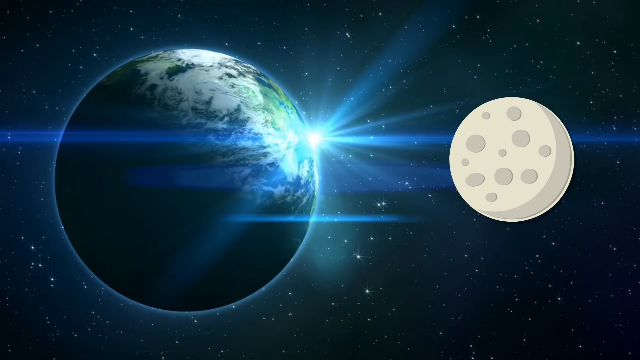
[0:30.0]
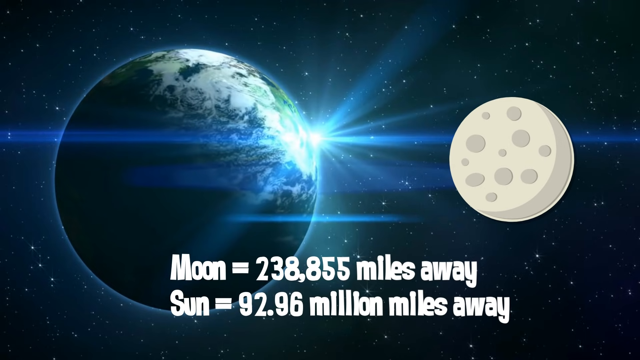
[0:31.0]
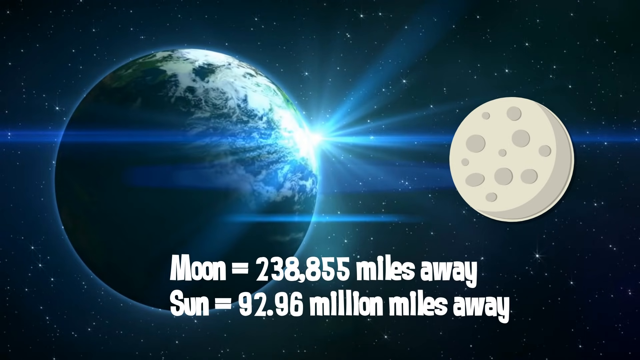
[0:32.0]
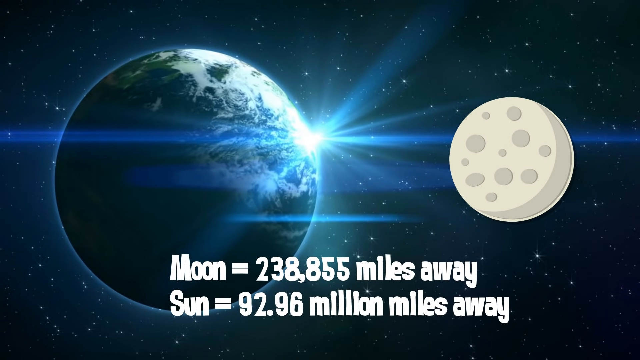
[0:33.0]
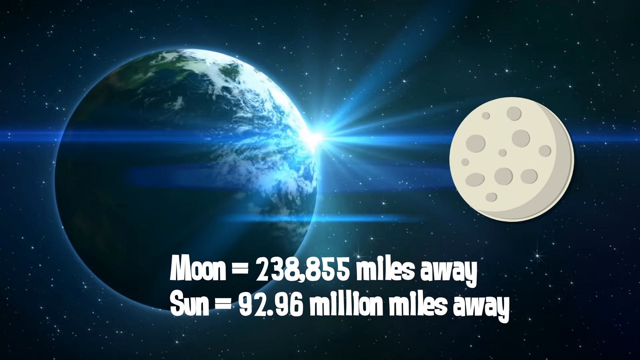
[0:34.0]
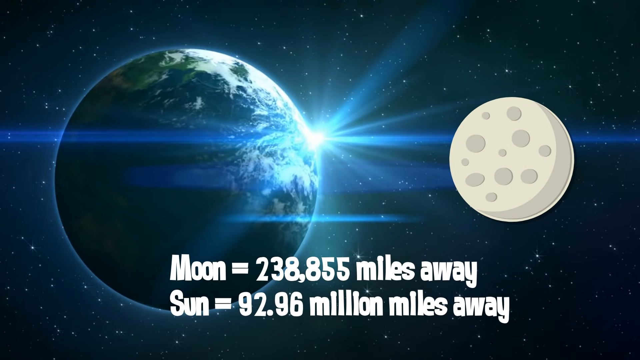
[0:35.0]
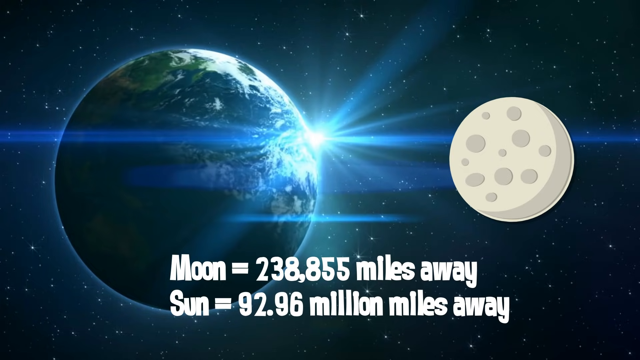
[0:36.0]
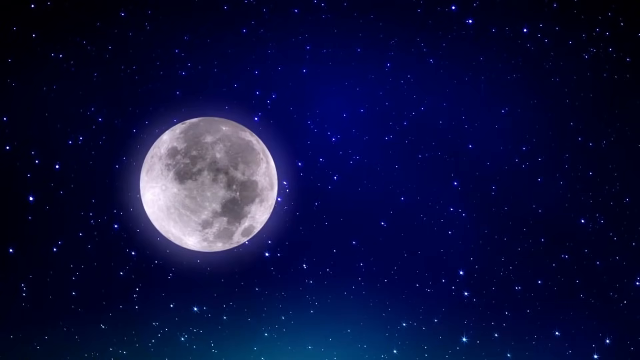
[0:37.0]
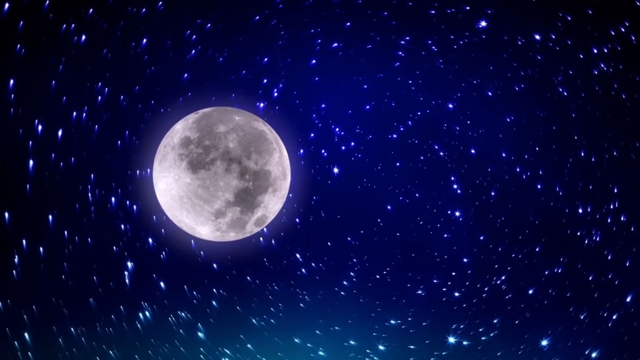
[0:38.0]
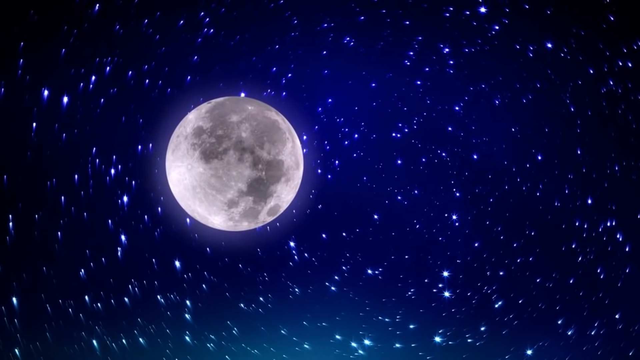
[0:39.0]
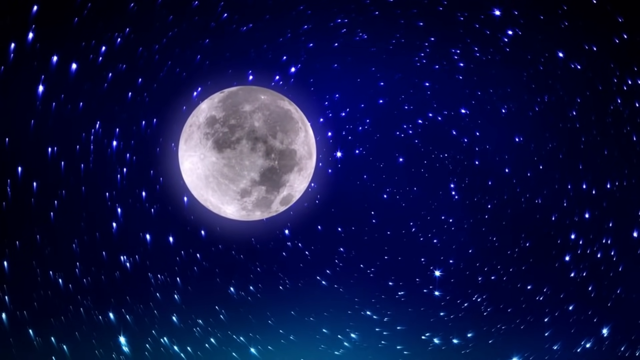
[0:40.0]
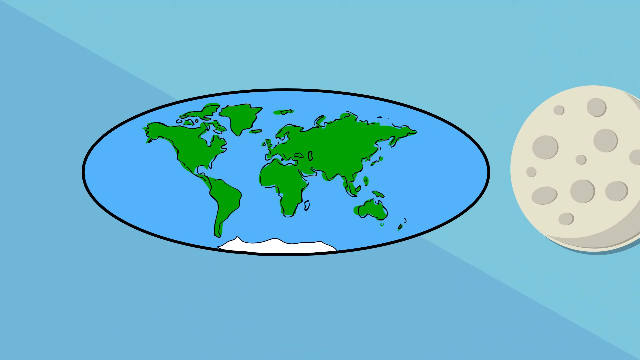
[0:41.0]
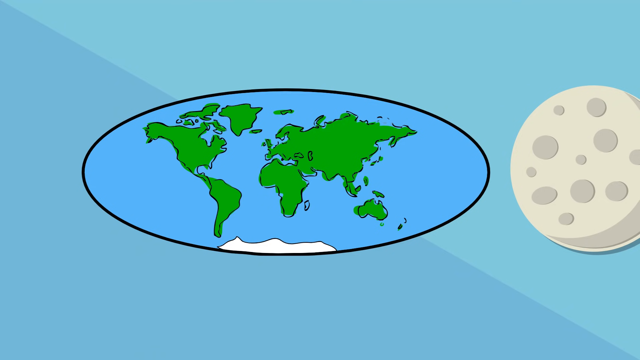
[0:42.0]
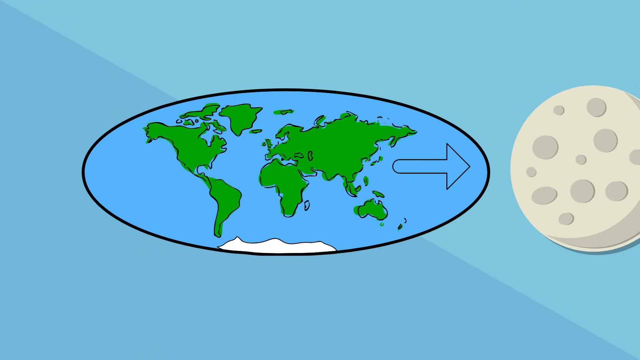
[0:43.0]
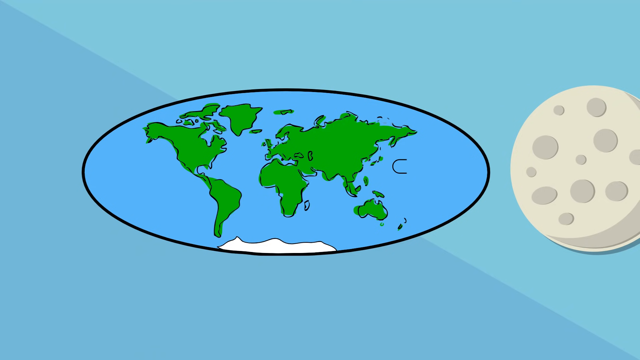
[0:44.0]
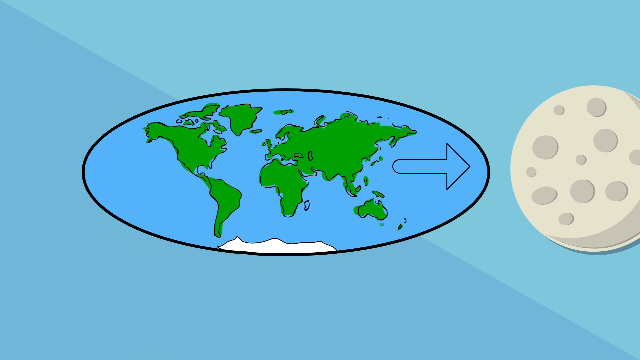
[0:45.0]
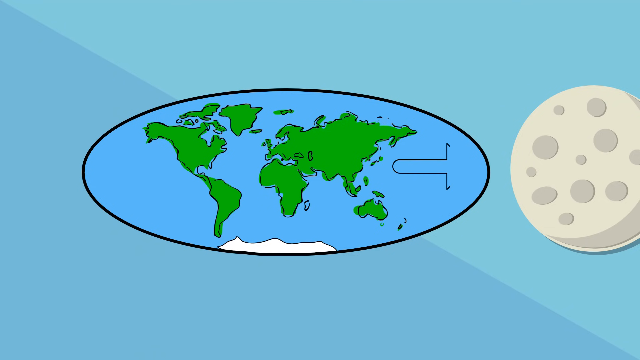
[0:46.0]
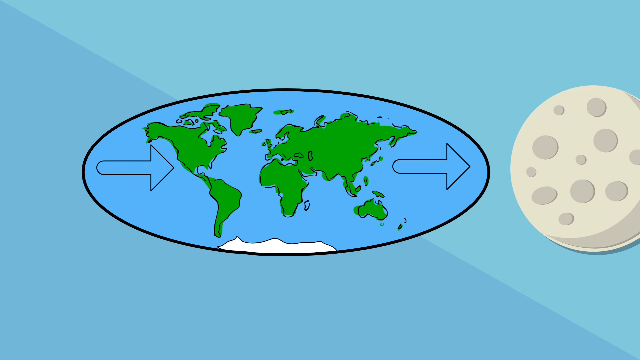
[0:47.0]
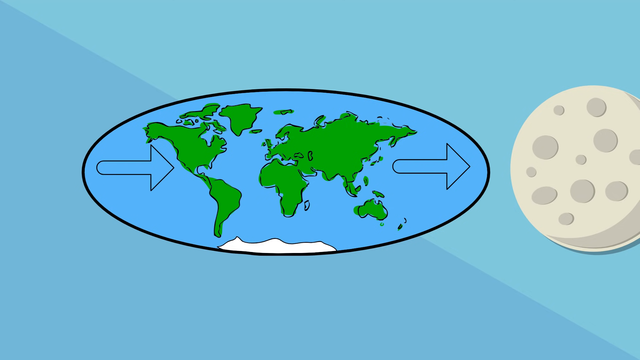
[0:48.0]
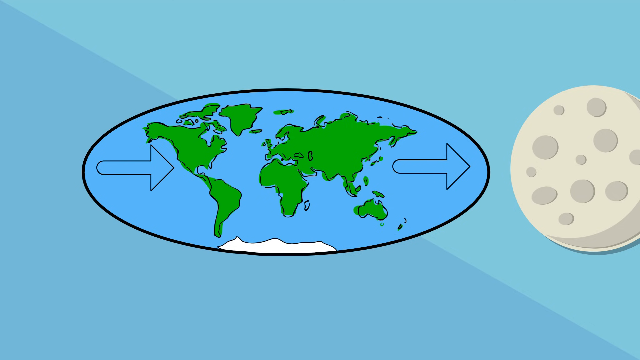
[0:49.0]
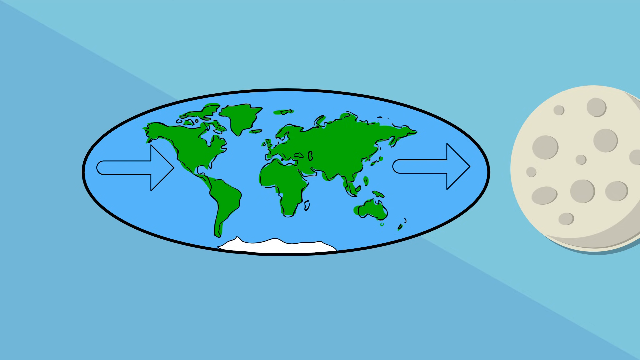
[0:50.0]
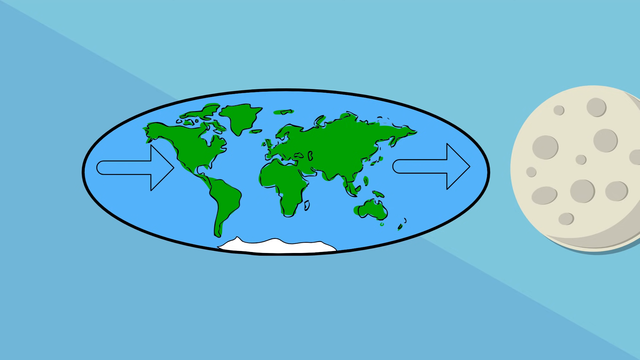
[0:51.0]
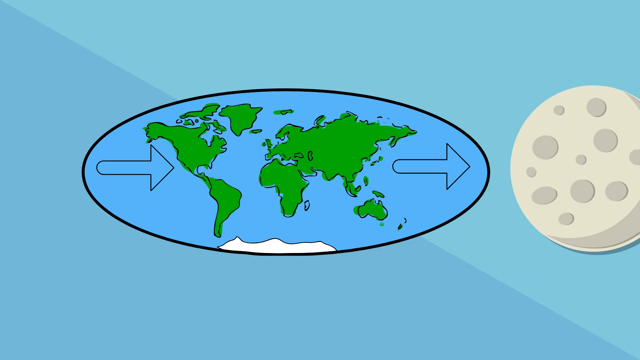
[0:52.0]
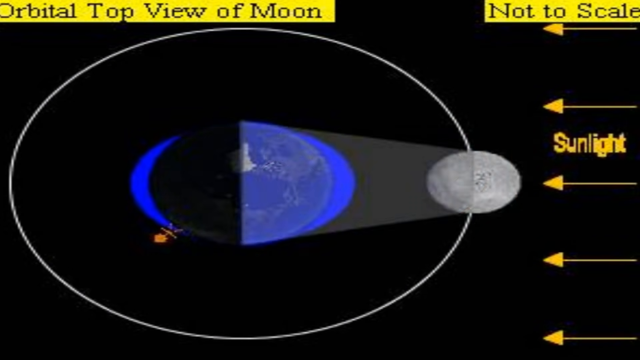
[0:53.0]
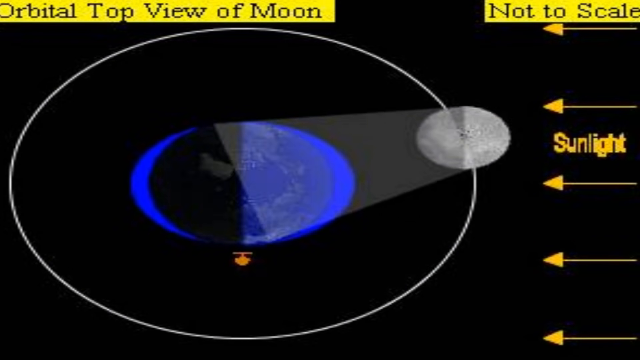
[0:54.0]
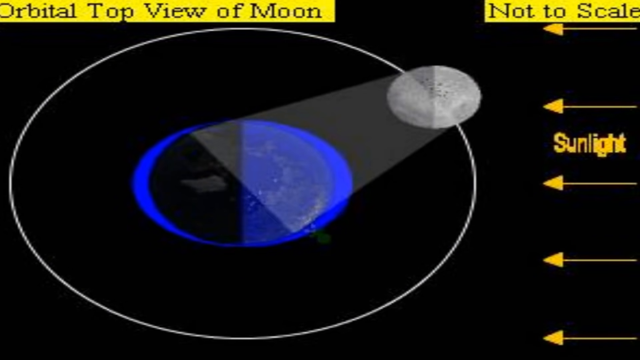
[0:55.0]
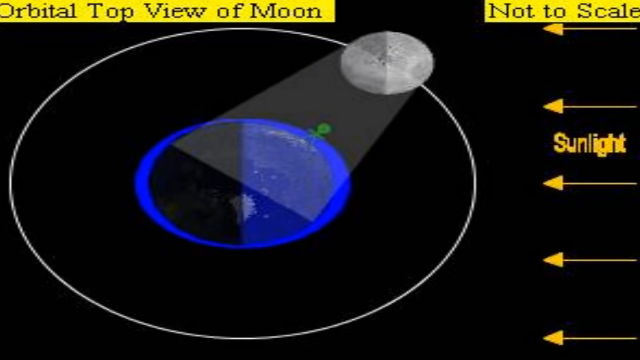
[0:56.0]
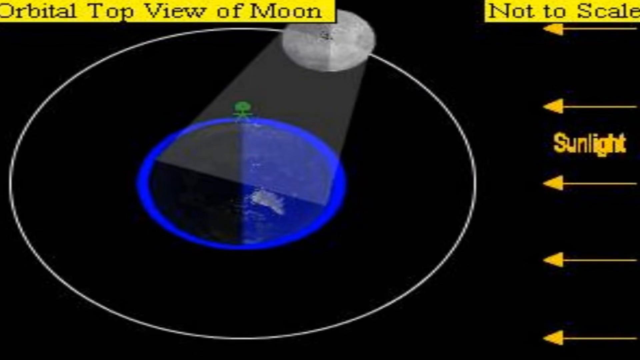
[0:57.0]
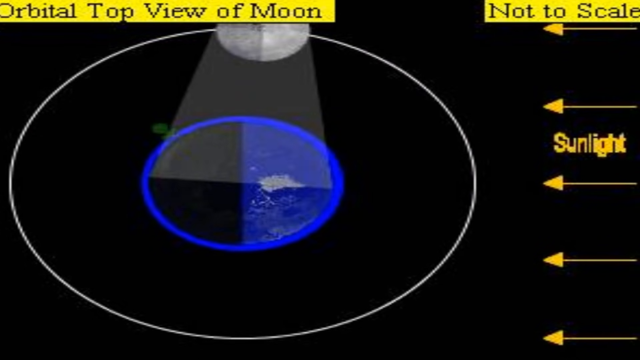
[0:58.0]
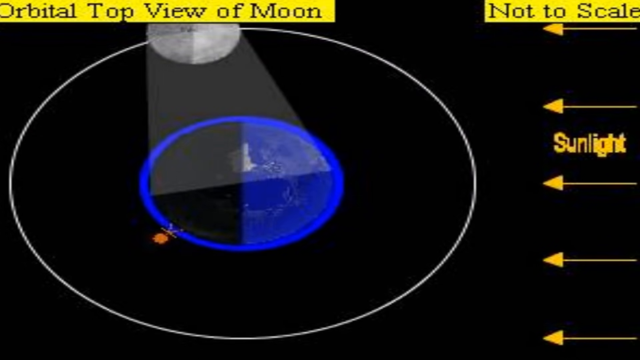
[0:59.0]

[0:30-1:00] Captions appear from the bottom while the Earth remains on the left side and the Moon on the right. The captions give the distances in miles between the Earth and the Moon and between the Sun and the Earth: "Moon equals 238,855 miles away" and "Sun equals 92.96 million miles away". The scene changes to the moon on the left in a purple lit sky with many white stars around it. The scene changes again to a long map projection view of the world, with green continents and the Antarctica area in white. An arrow points to the right, toward the moon on the far right side, and another arrow appears on the left side, also pointing to the right, so the two right-pointing arrows are on the left and right sides of the map. Next, the Earth is in the middle, rotating and spinning very quickly, with the Moon next to it on the right side. In the top left corner is a title that says "Orbital top view of moon". It appears to be a simulation in a very quick time-lapse, with the moon rotating around the Earth as the Earth spins very fast.